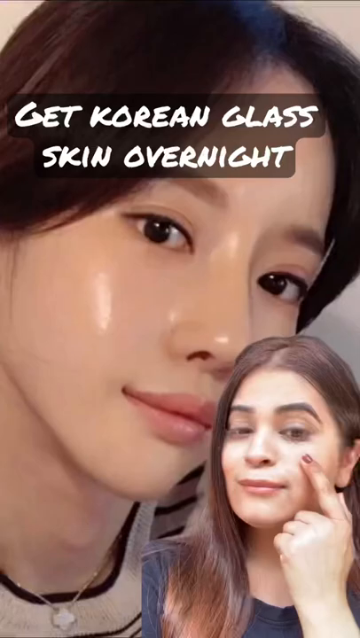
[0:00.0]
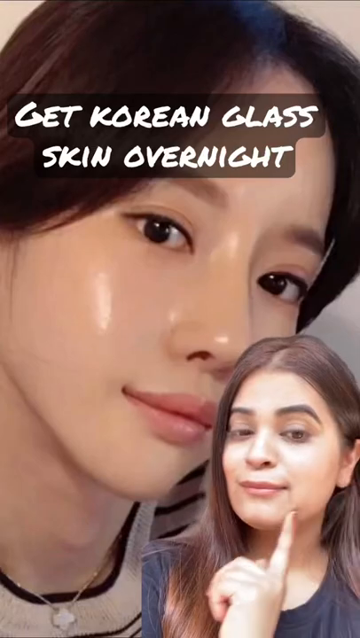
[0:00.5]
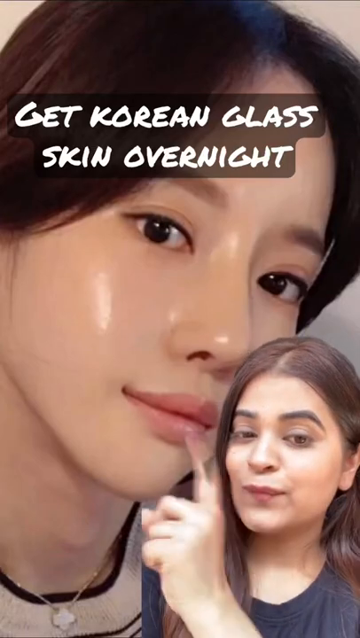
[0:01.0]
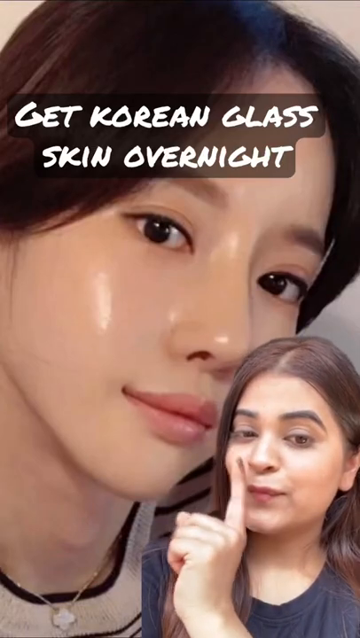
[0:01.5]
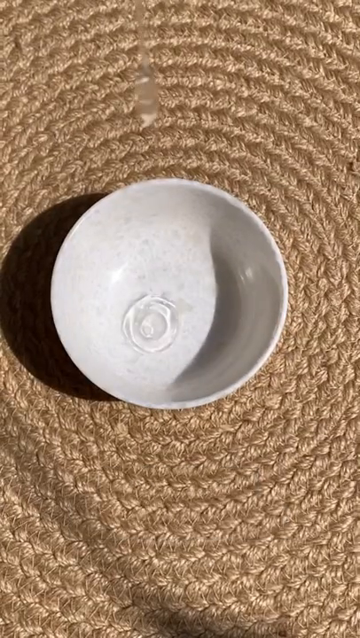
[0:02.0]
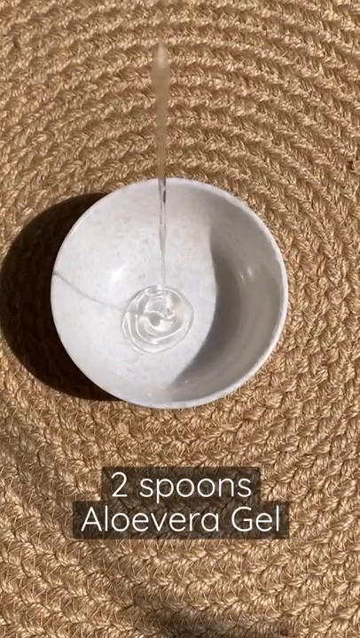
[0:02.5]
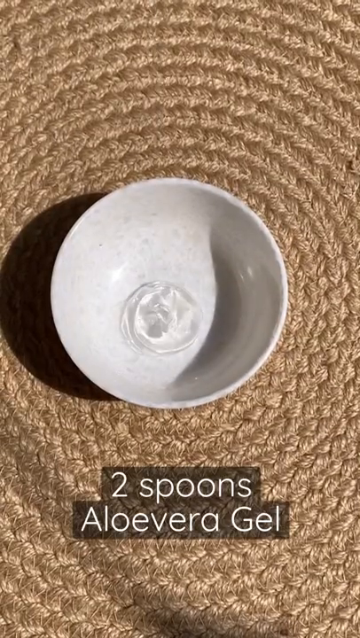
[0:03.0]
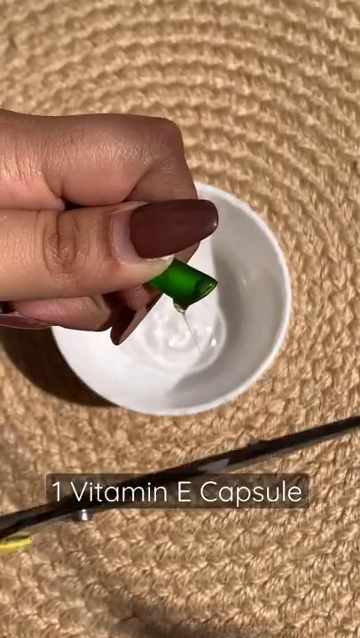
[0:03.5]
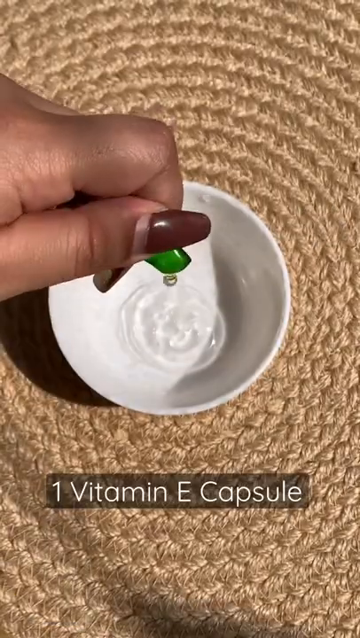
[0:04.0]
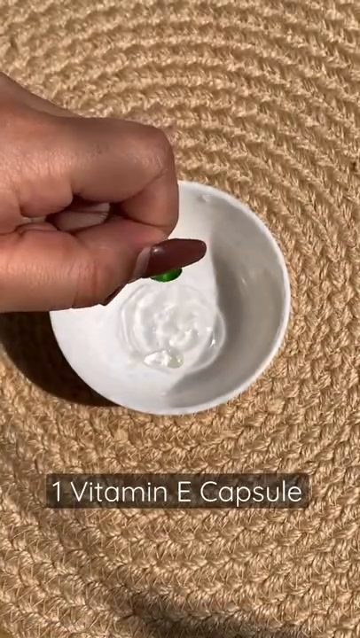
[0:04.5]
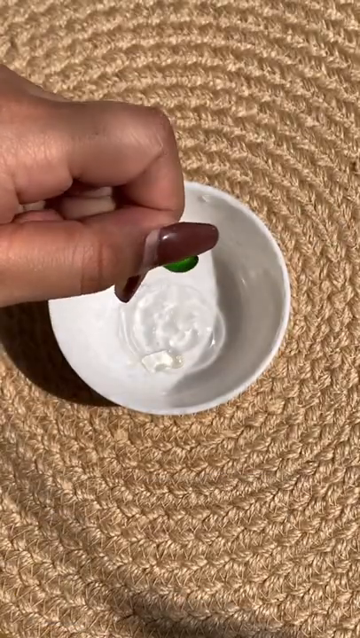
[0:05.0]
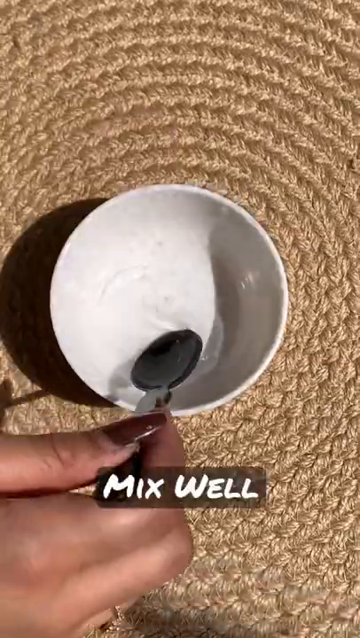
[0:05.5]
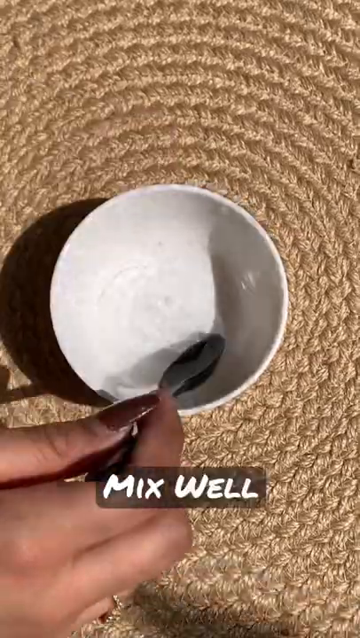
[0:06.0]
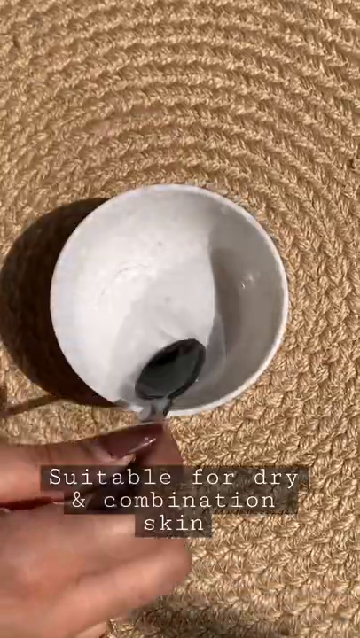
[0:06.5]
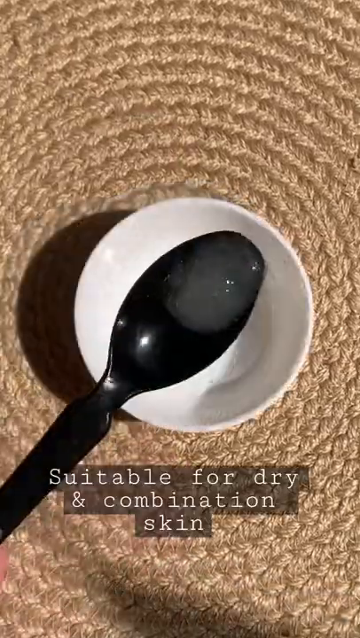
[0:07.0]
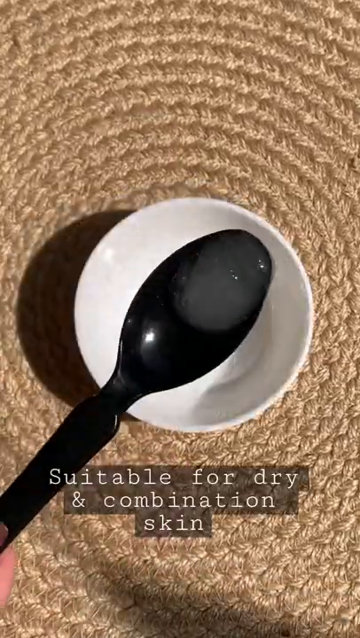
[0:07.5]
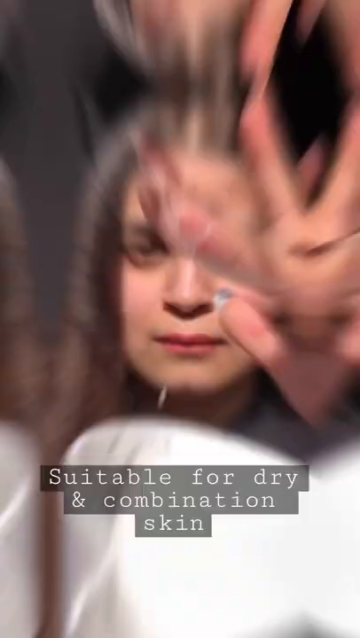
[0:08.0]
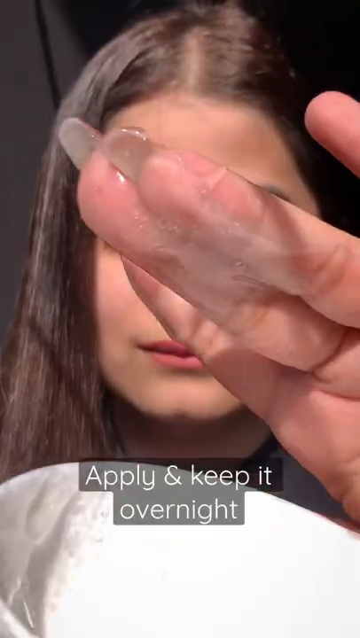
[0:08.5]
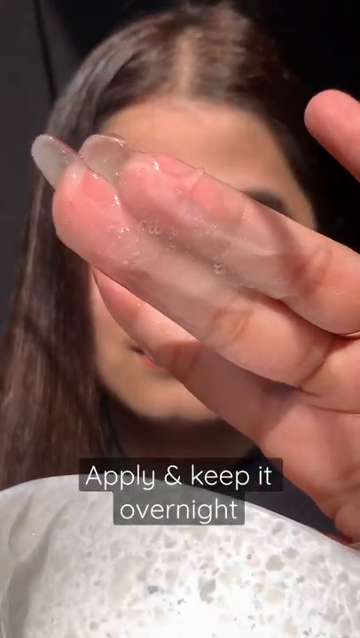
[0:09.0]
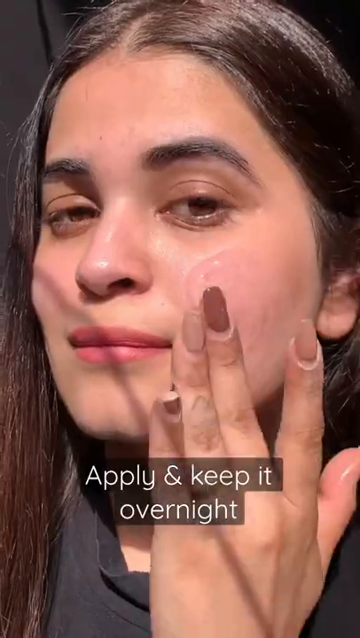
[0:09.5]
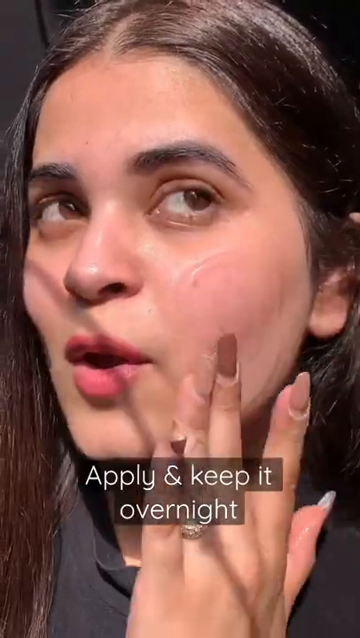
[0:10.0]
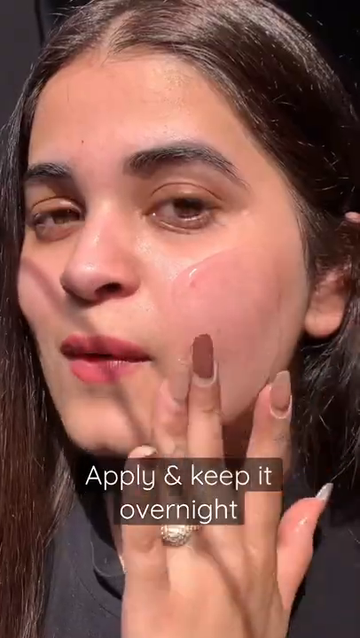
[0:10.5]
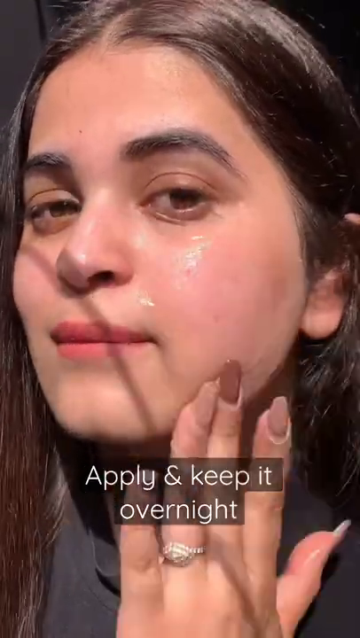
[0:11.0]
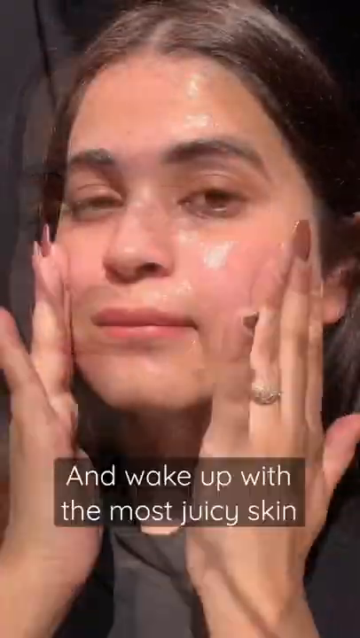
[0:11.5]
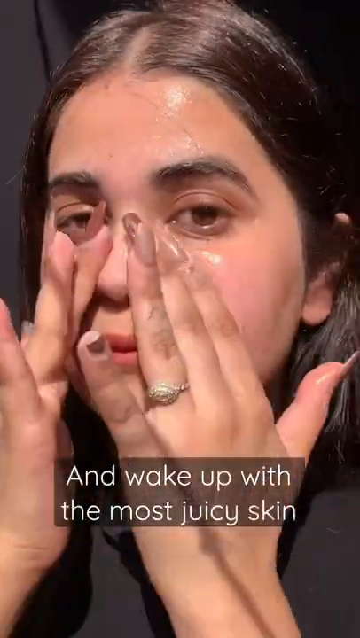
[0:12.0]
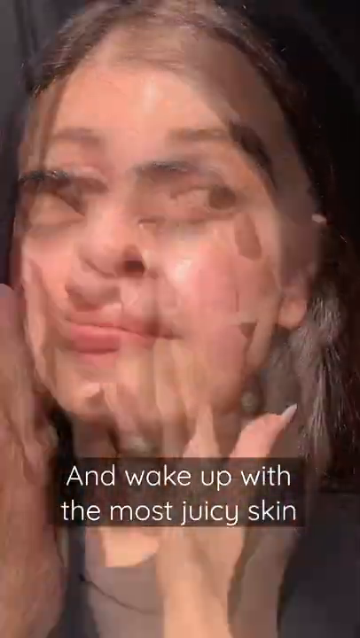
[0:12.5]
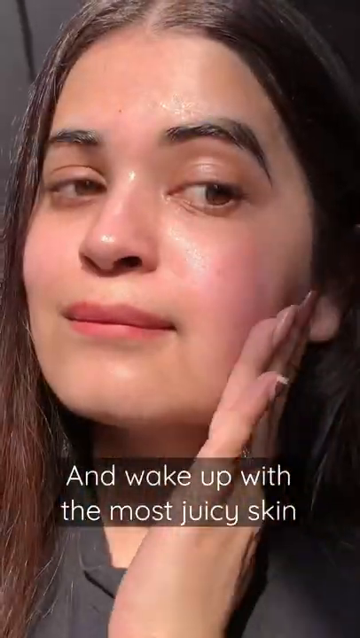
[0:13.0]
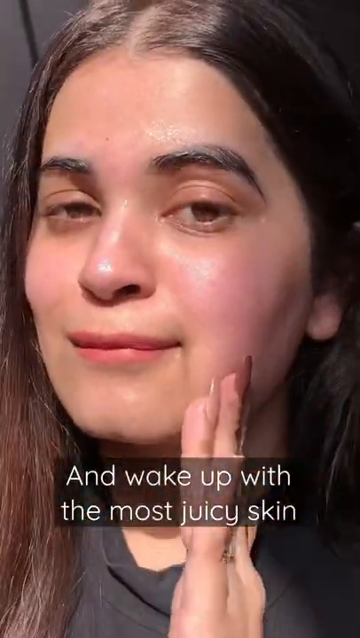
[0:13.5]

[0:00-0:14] A woman with white skin and long, straight brown hair points to an image of a Korean woman behind her. White all-caps text reads "Get Korean Glass Skin Overnight." She points to the image, and then it rotates. A white bowl on a woven mat appears, with gel being poured into it, and the text reads "Two Spoons Aloe Vera Gel." Next, her hand, with long, brown, coffin-shaped nails, cuts open a green vitamin E capsule and squeezes it into the bowl, with the text "One Vitamin E Capsule." She mixes it with a black plastic spoon as the text reads "Mix Well," then shows the clear, thick liquid inside the spoon, turning the spoon slightly. The text reads "Suitable for Dry and Combination Skin." The scene changes to her looking at the camera and showing the liquid on her fingers. The text "Apply and Keep Overnight" appears as she rubs it onto her cheek and around the rest of her face, and then the text reads "Wake Up with the Most Juicy Skin."